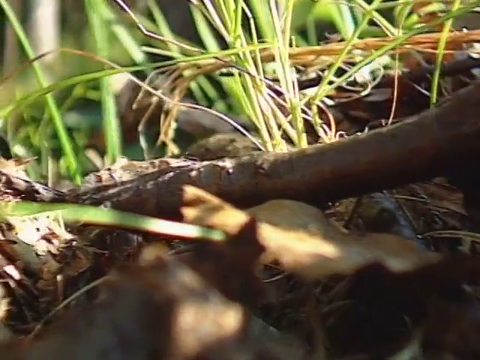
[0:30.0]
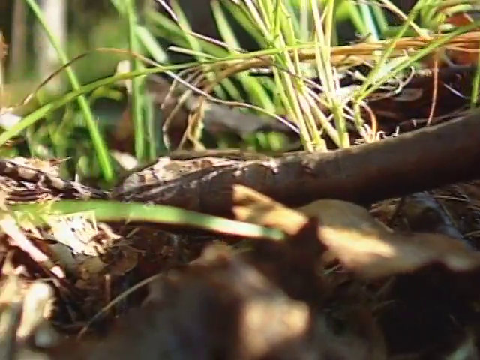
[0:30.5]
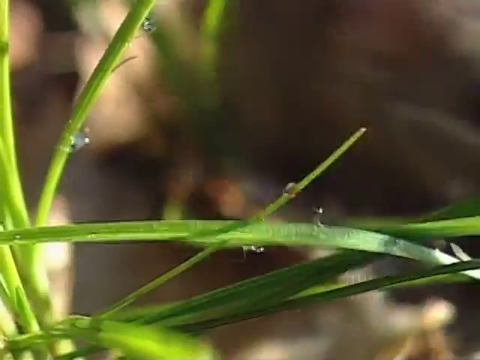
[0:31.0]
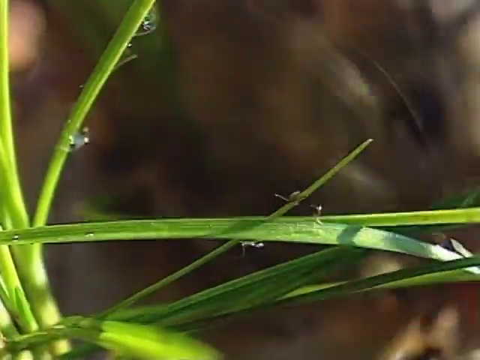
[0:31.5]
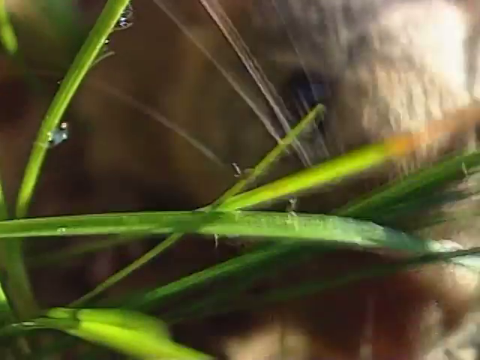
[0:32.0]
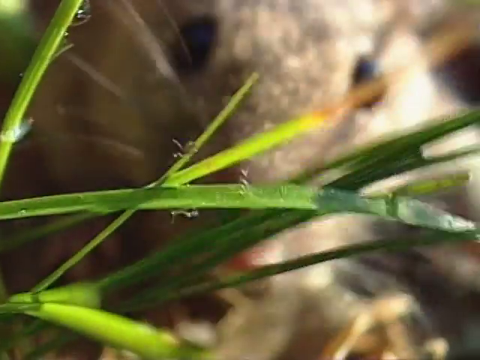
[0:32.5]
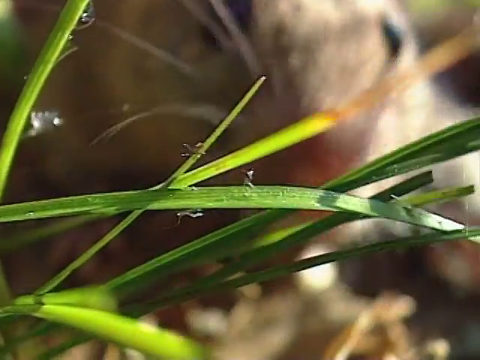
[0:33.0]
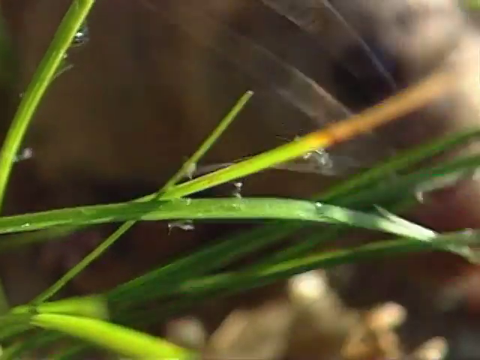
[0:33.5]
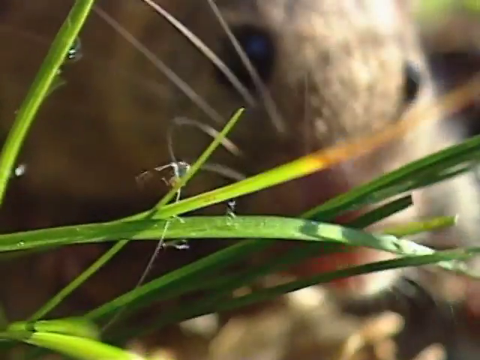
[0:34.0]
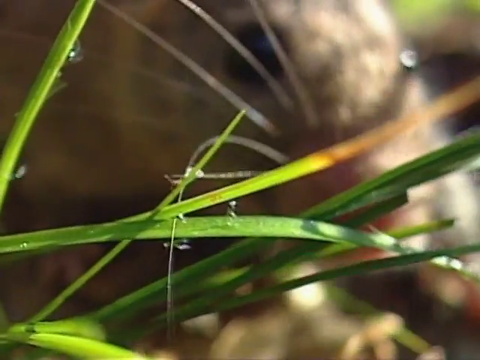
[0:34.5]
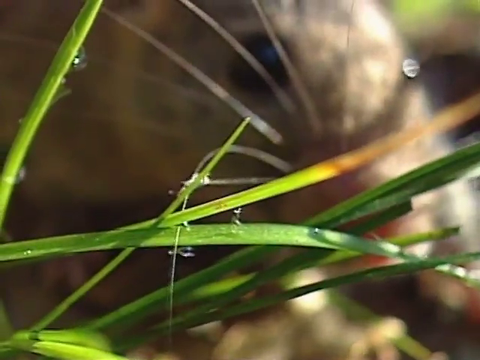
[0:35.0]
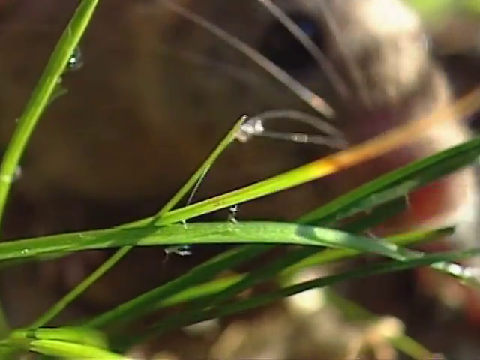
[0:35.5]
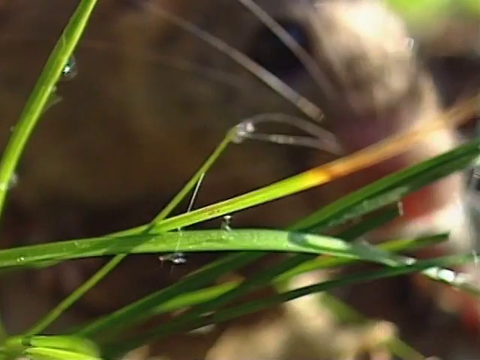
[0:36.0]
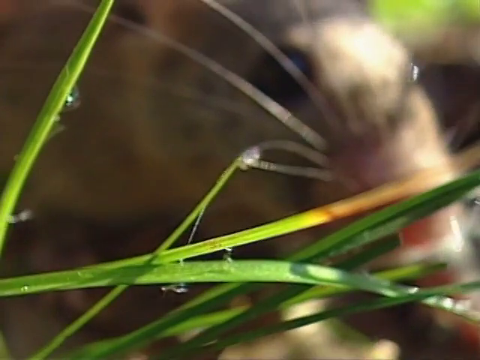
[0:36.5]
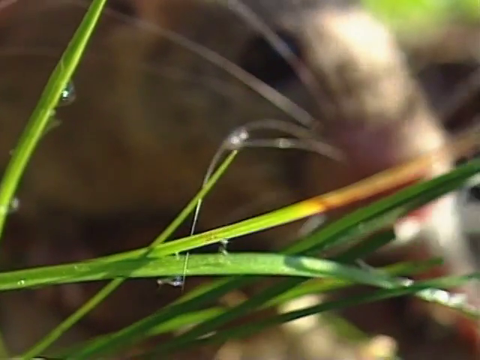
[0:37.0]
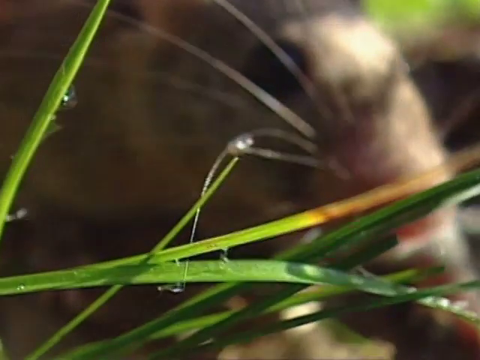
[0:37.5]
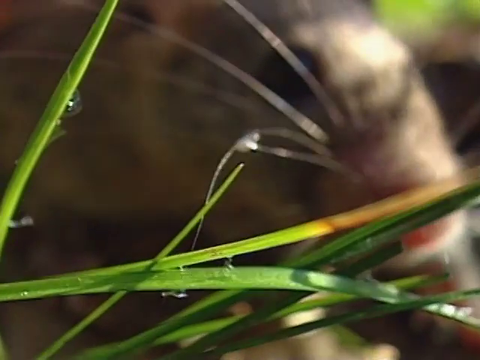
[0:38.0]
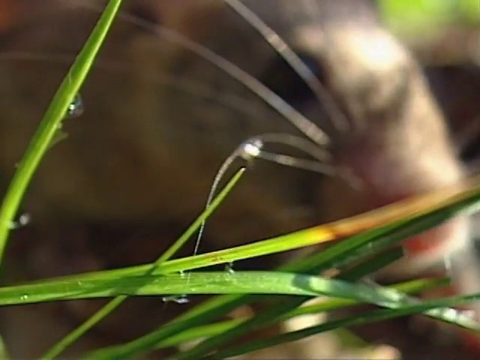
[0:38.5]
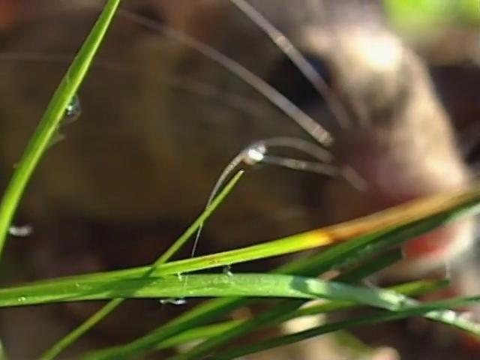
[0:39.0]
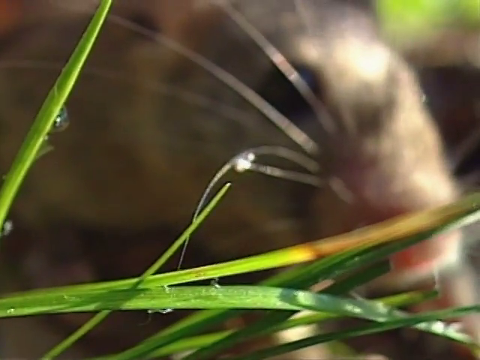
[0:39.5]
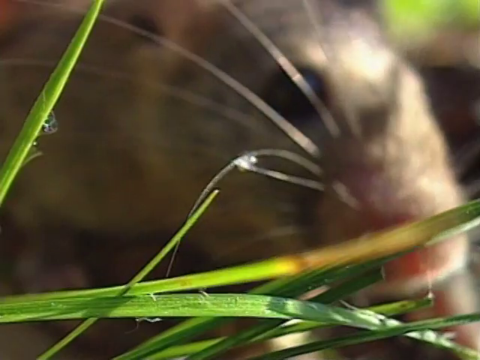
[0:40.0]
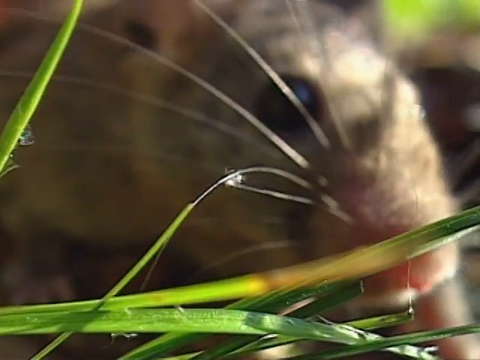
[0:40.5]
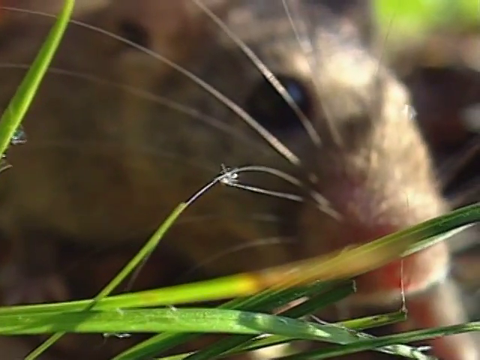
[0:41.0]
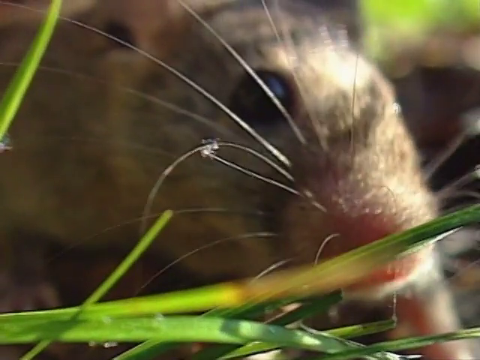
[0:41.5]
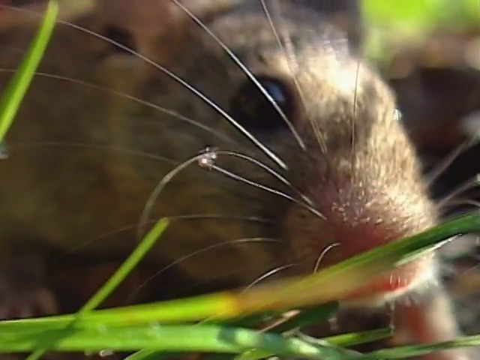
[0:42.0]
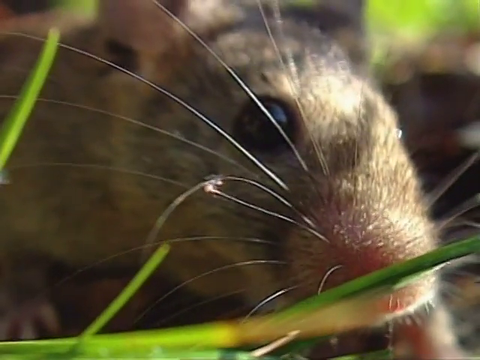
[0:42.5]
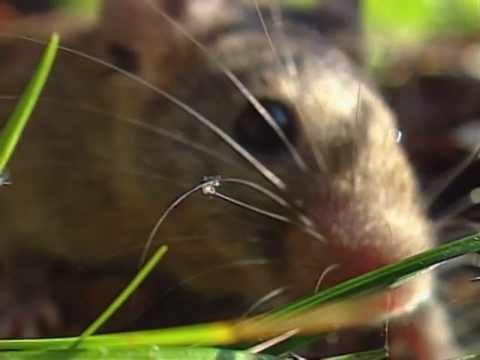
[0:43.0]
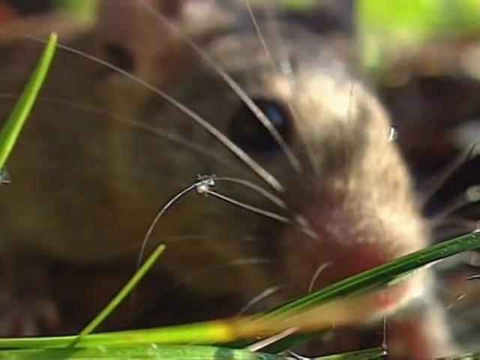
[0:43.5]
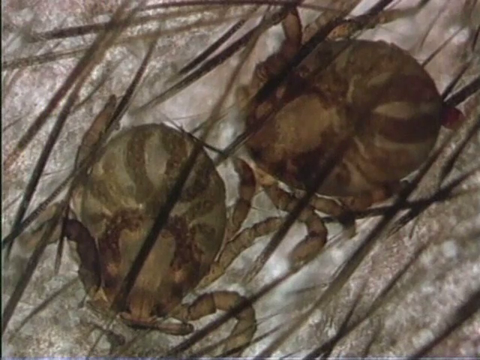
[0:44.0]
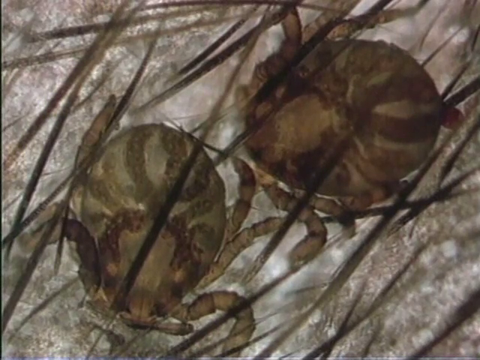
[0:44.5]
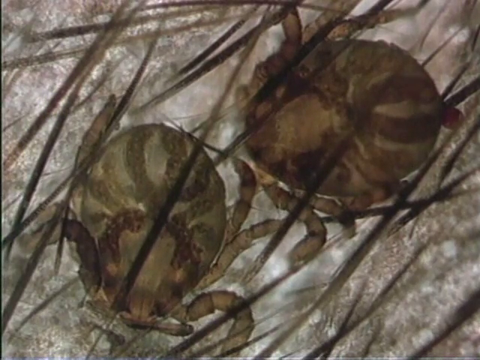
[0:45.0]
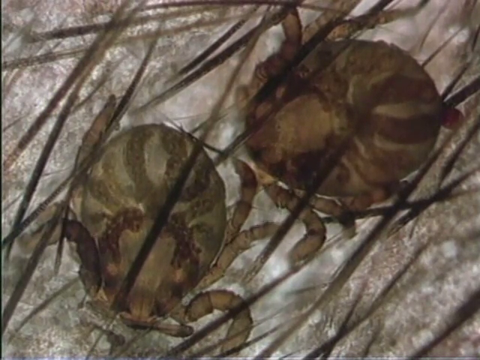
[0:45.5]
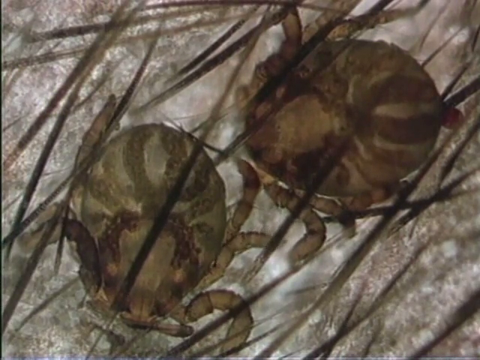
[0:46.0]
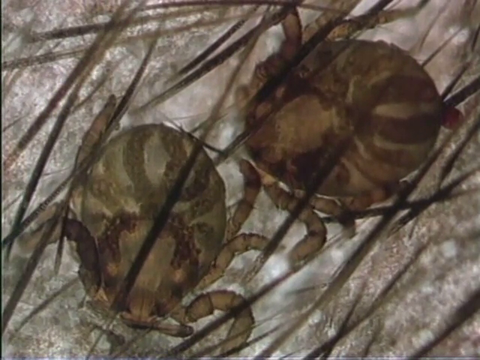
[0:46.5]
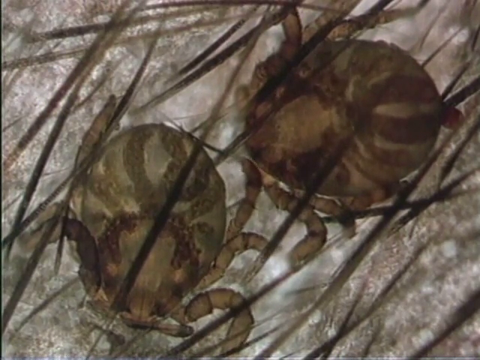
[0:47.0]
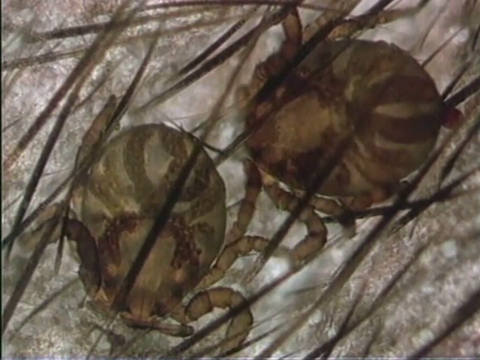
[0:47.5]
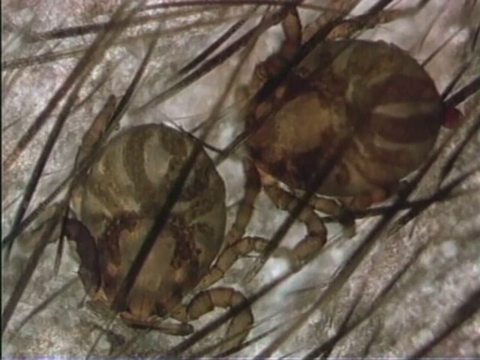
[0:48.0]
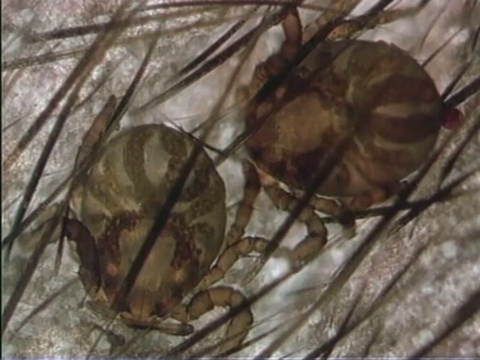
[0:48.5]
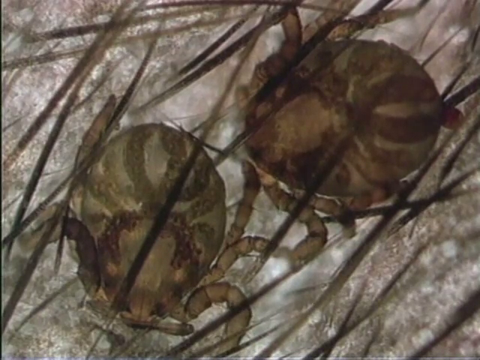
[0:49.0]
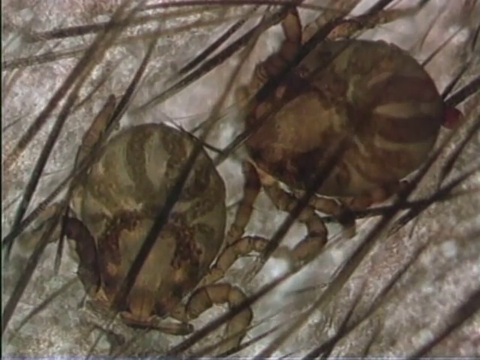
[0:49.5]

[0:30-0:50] A rat or mouse crawls across the ground, sniffing. It crawls past blades of grass with ticks on them and starts sniffing the grass. Its very pink nose is visible. Then a close-up shows what looks like two ticks on fur, possibly on the rat. In an almost microscopic view, the two very translucent ticks sit there and move around somewhat, with the places where hair follicles would be visible.